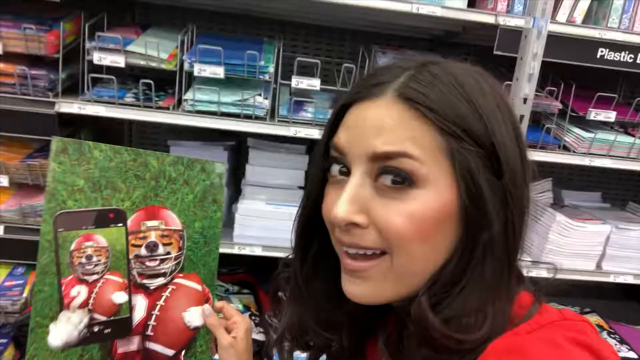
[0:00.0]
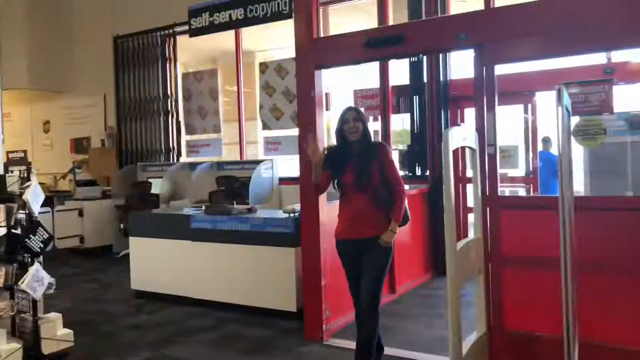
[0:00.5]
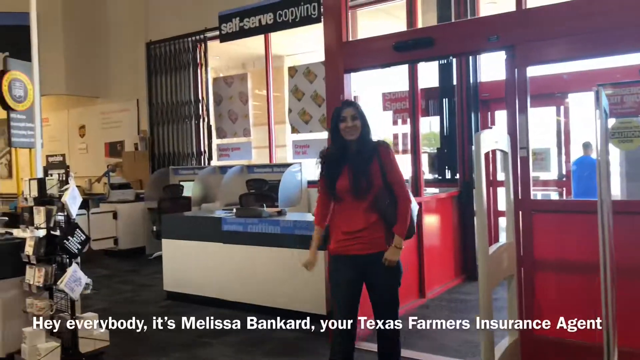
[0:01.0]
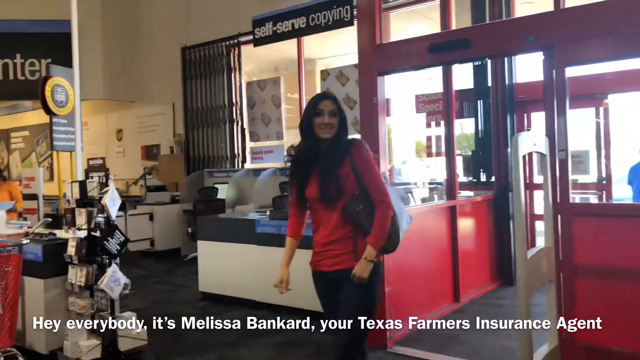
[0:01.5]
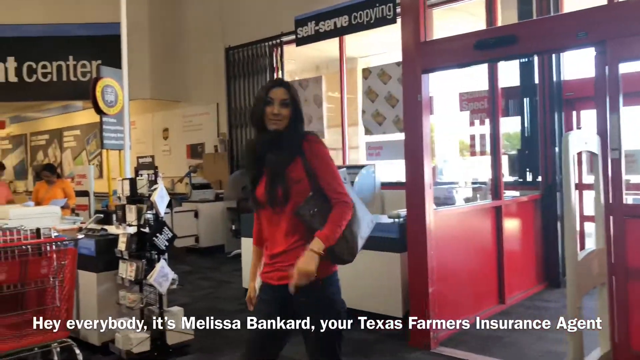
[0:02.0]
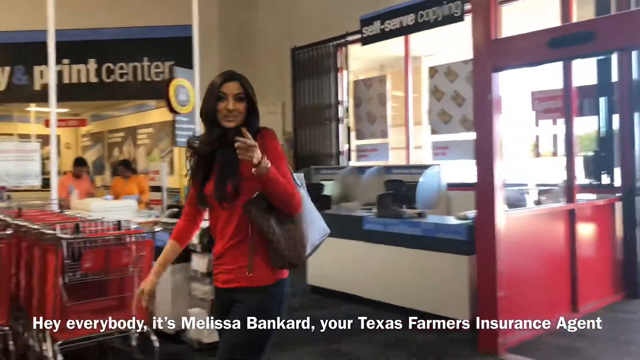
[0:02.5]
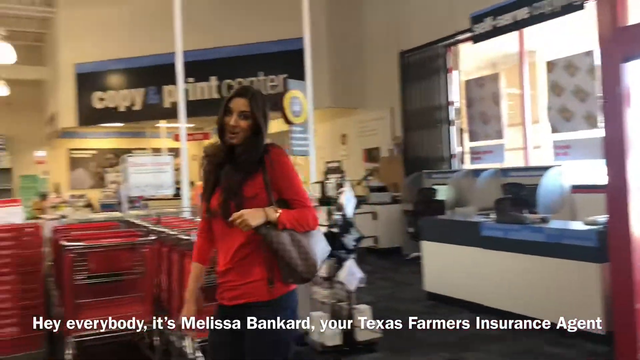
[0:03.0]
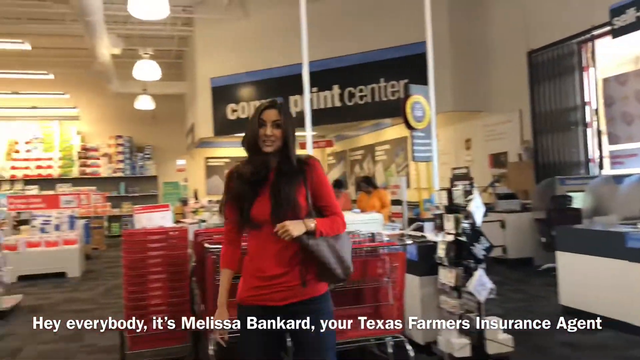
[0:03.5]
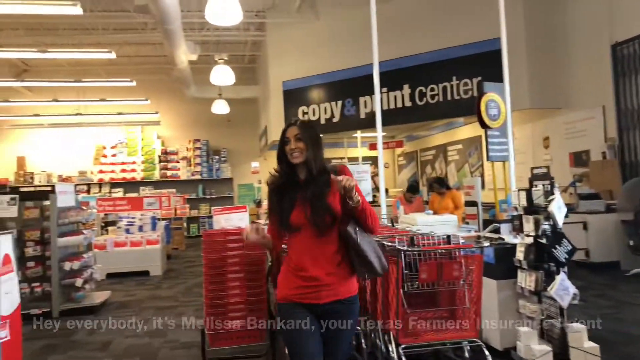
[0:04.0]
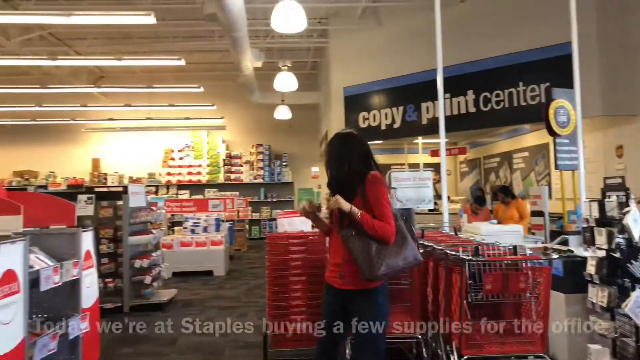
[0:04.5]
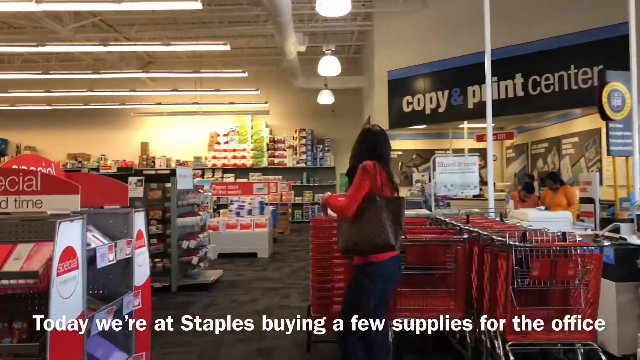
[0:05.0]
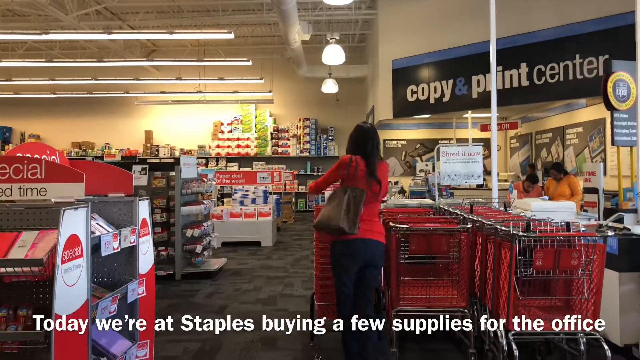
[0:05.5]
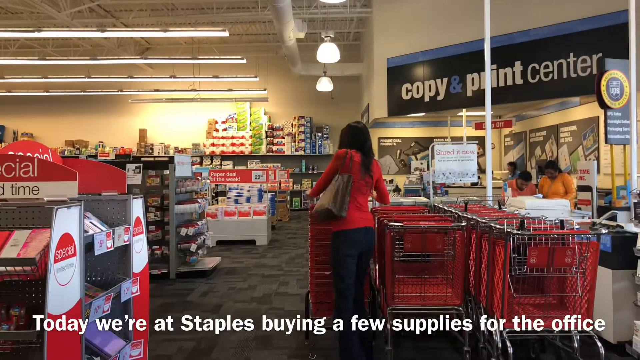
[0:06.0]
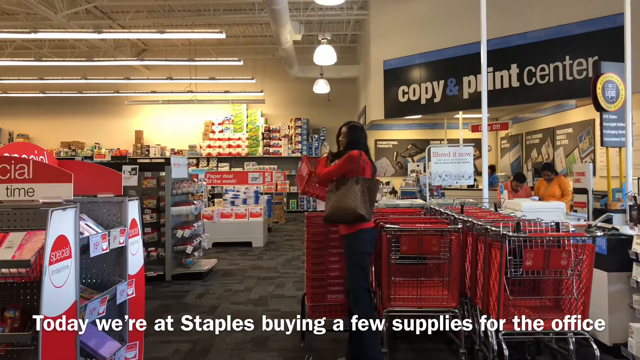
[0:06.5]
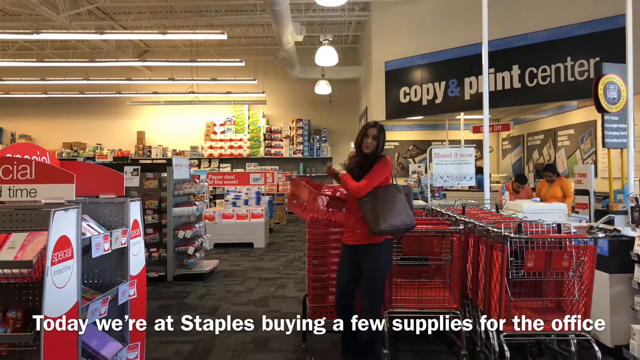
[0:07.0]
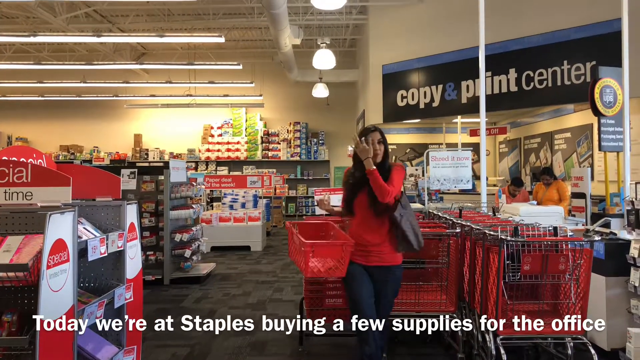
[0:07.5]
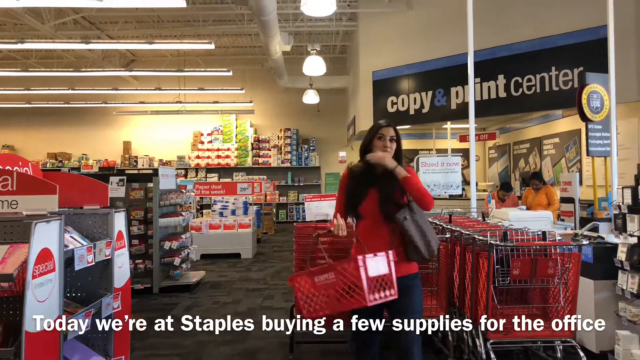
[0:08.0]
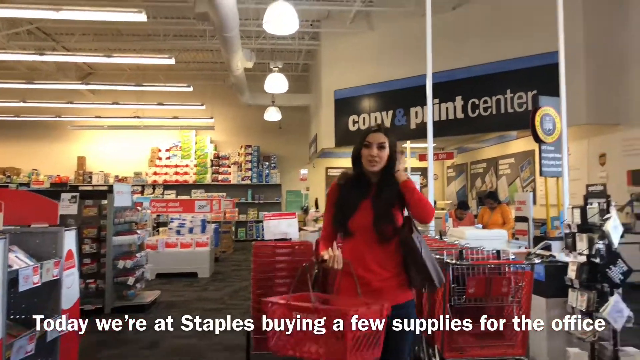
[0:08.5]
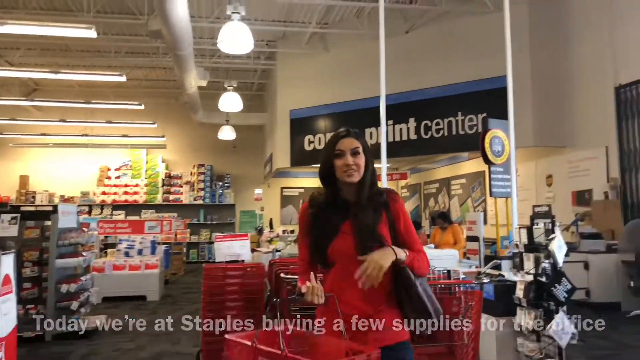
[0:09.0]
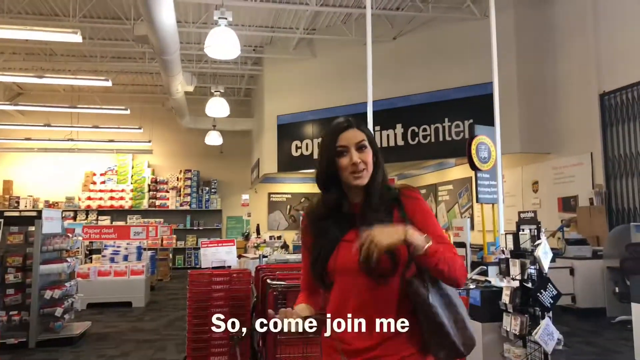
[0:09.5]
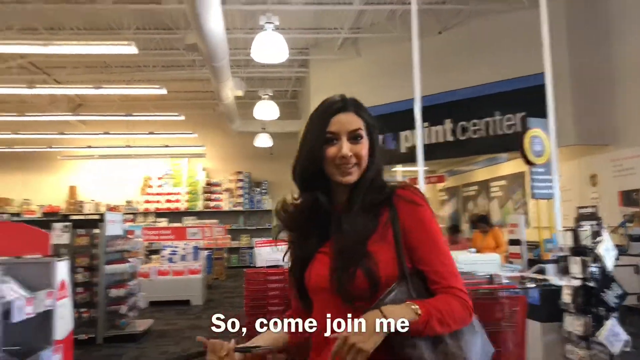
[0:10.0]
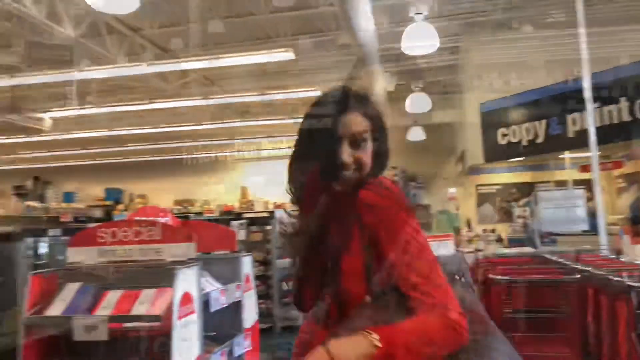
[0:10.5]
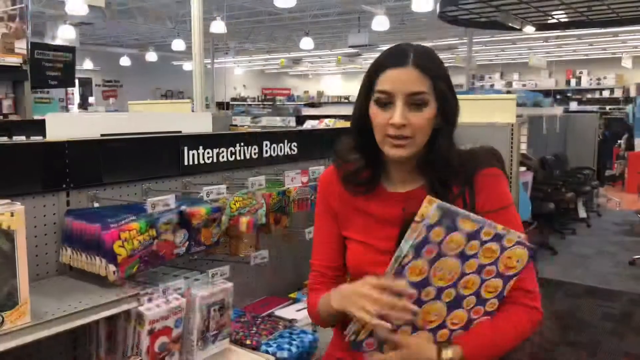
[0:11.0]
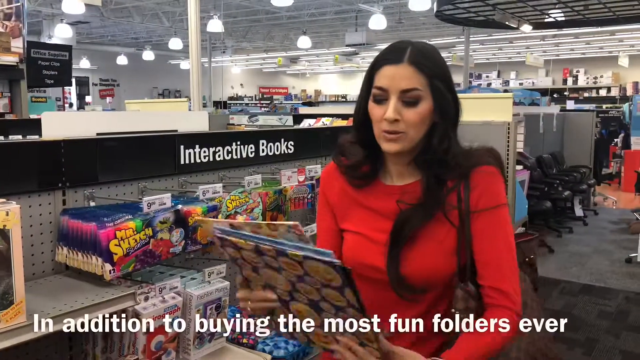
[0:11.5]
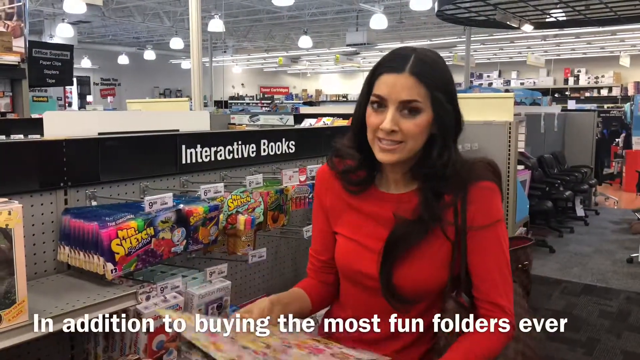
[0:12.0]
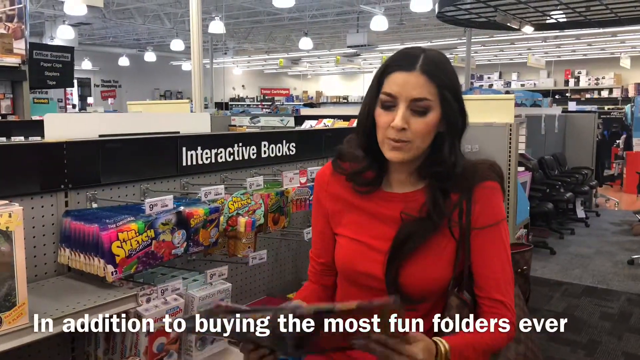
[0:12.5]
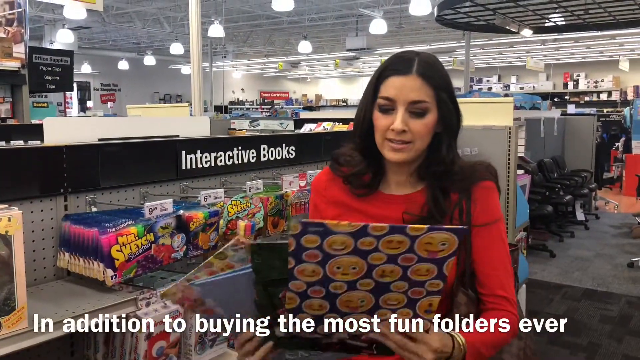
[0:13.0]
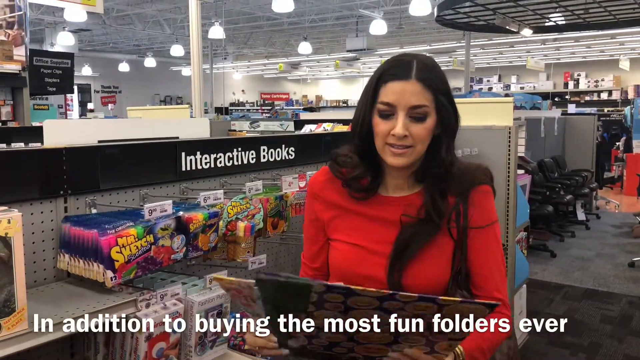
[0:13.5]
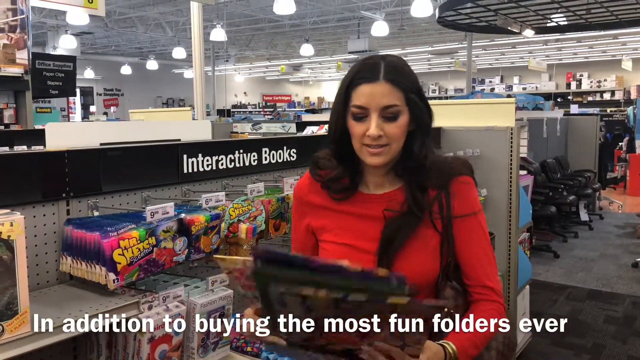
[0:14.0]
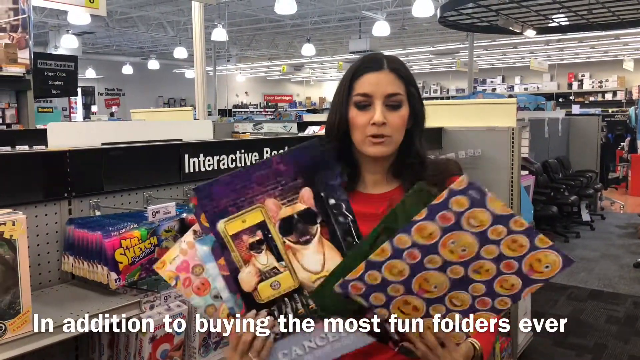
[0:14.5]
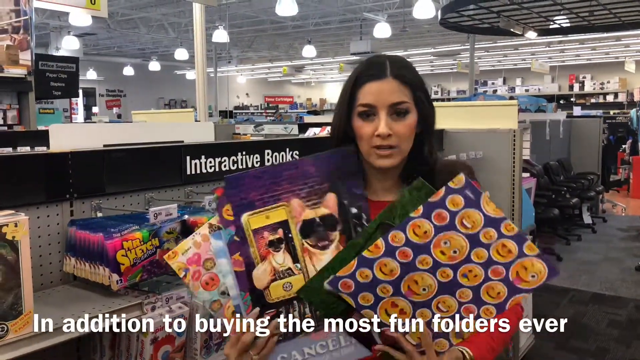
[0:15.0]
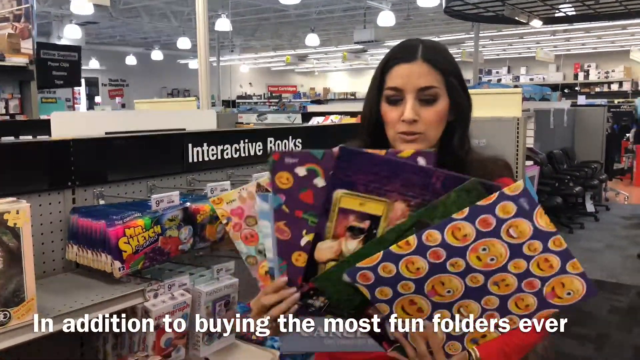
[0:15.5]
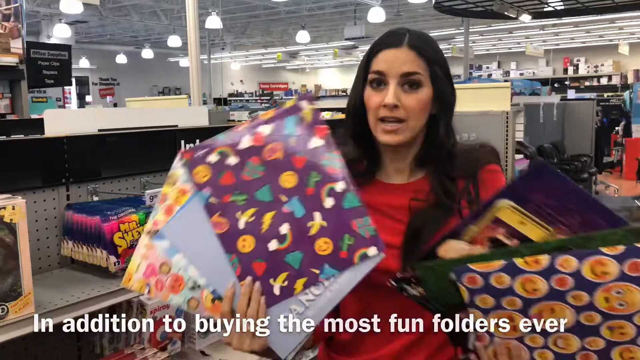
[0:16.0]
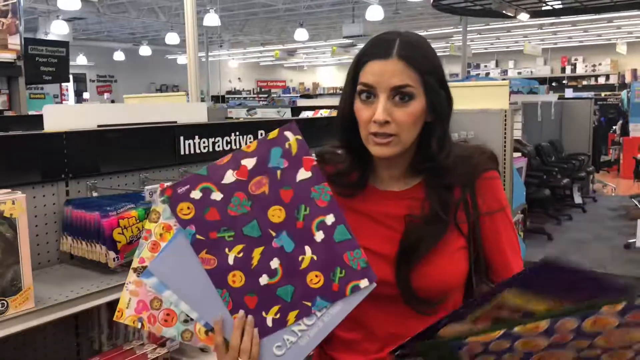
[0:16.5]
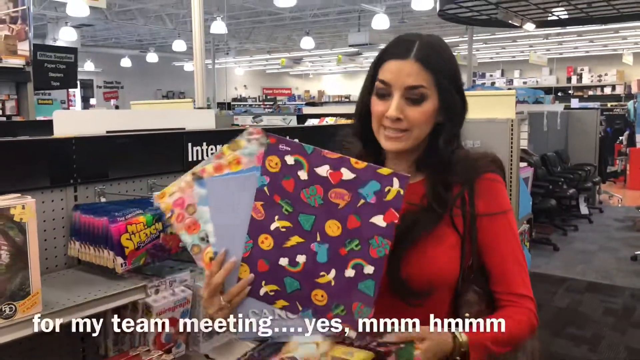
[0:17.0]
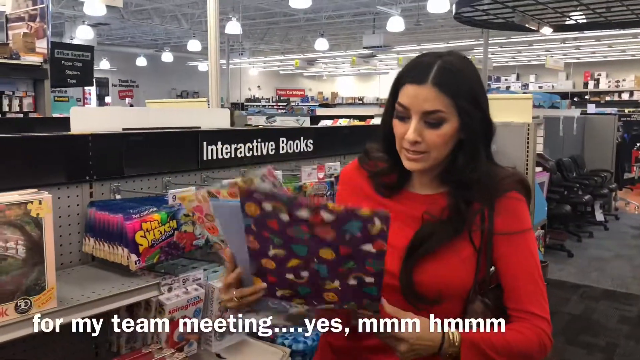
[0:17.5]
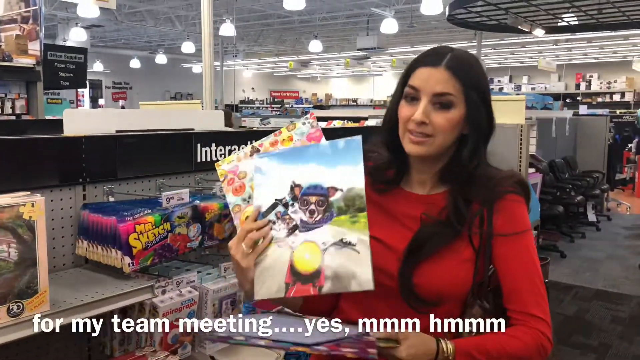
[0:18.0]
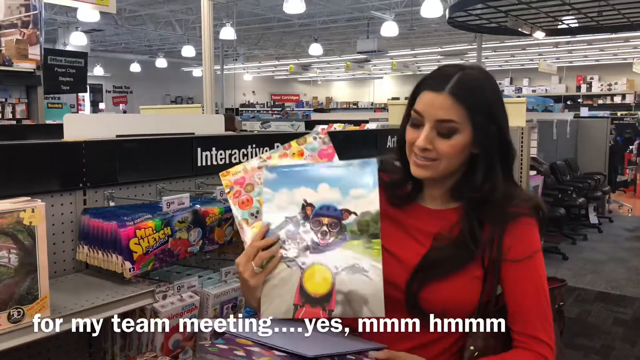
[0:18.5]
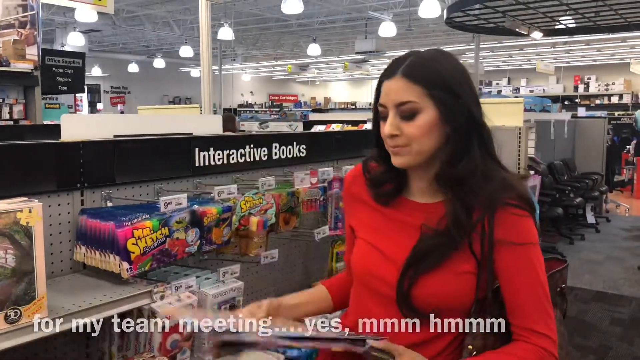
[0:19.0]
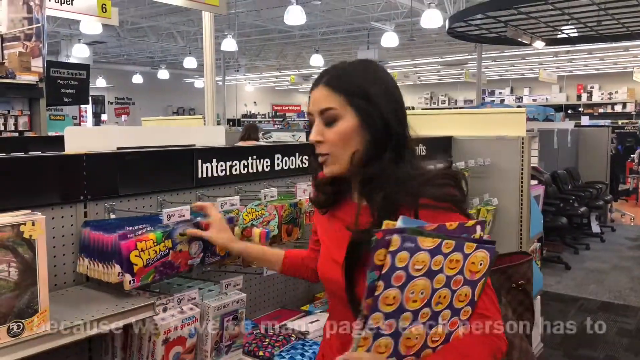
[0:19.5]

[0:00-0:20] Inside a stationery store of some kind, with a lot of paper supplies on shelves, the woman's face and head are shown. She has long brown hair and holds up a picture of a dog wearing a football uniform. The video cuts to her walking into the store. One sign says "self-serve copying" and another says "print center." As she walks in and speaks, red shopping carts are visible behind her, along with various signs that all have a red and white graphic design. She stands by a shelf of displayed items under a sign that says "interactive books," holding up some of the books and talking about them. The books look about the size of folders or calendars. Much of the interior, such as the doors and the product display signs, is red and white, while the self-serve copying sign is blue and white.